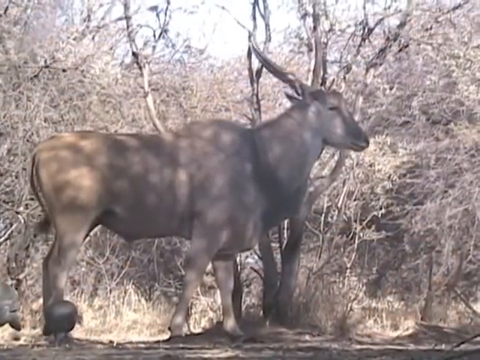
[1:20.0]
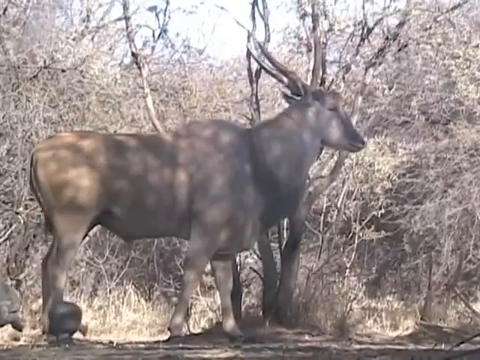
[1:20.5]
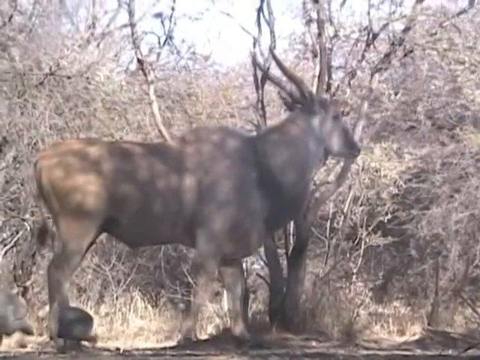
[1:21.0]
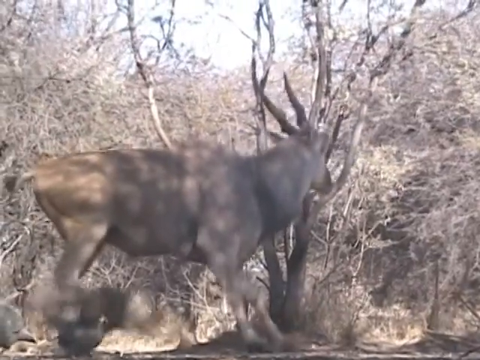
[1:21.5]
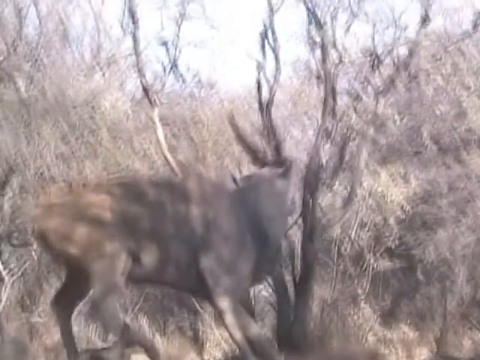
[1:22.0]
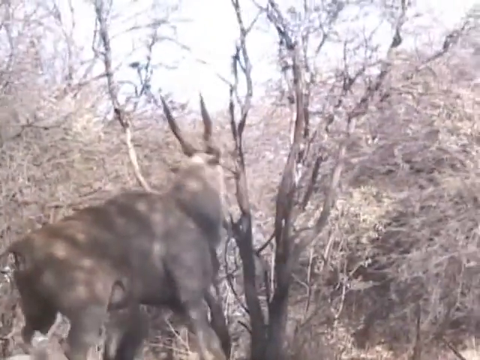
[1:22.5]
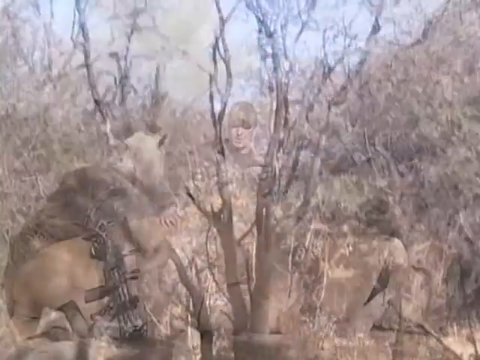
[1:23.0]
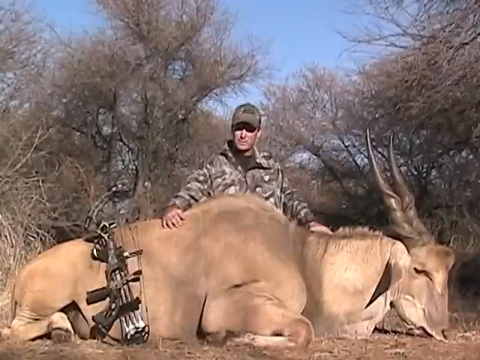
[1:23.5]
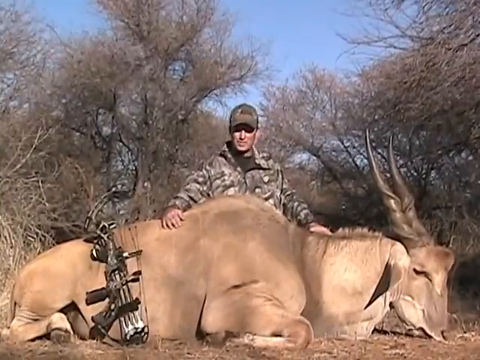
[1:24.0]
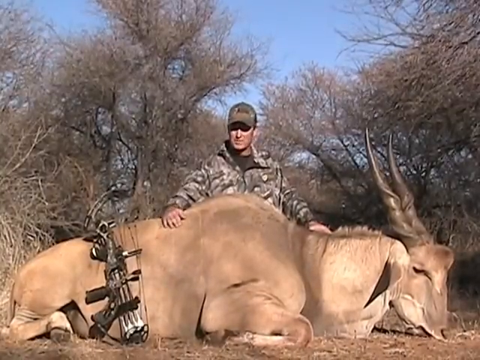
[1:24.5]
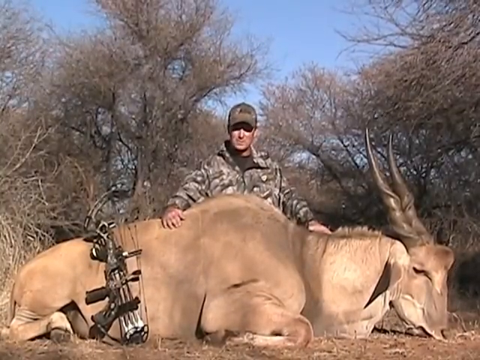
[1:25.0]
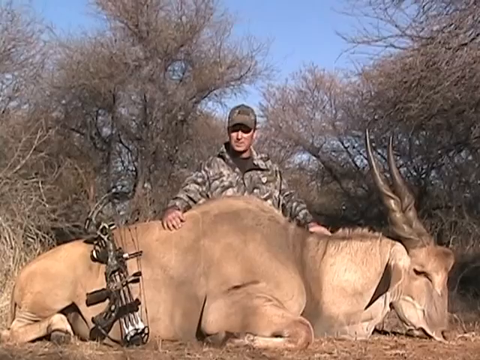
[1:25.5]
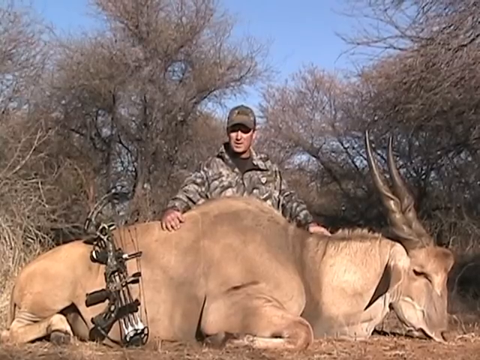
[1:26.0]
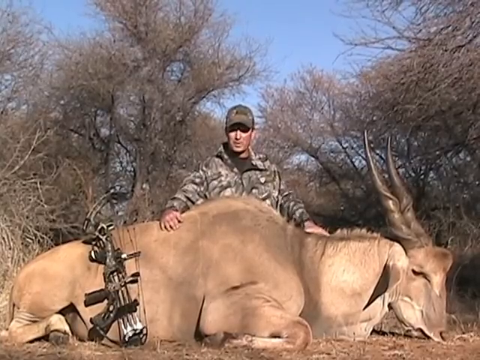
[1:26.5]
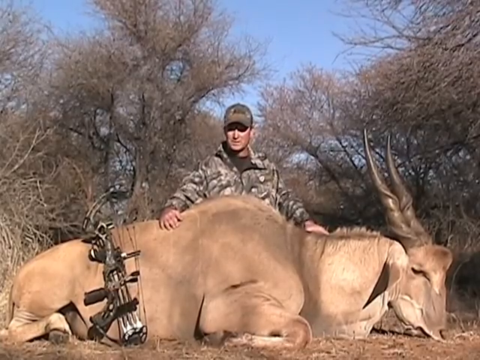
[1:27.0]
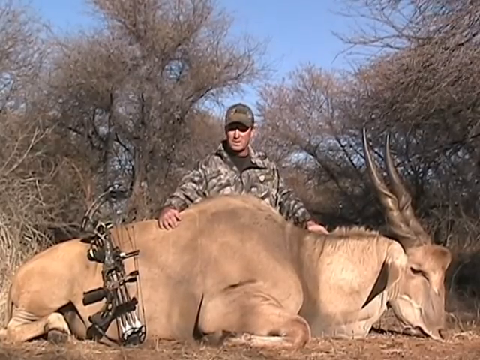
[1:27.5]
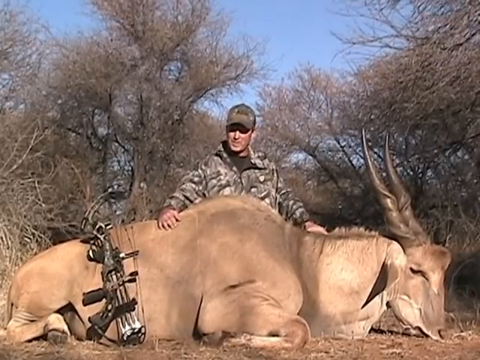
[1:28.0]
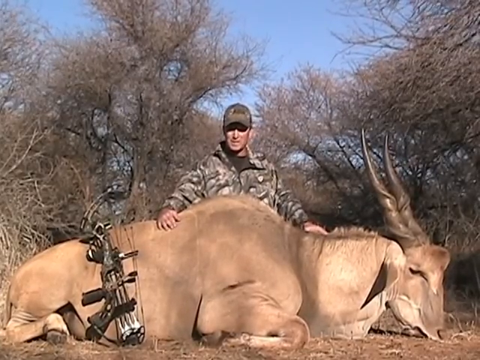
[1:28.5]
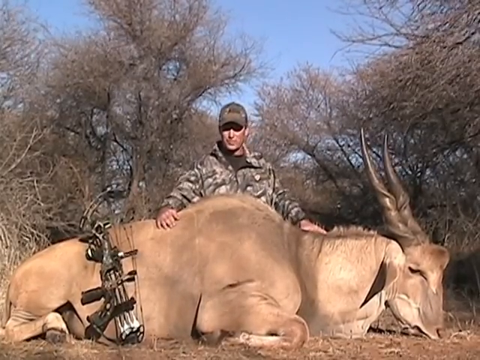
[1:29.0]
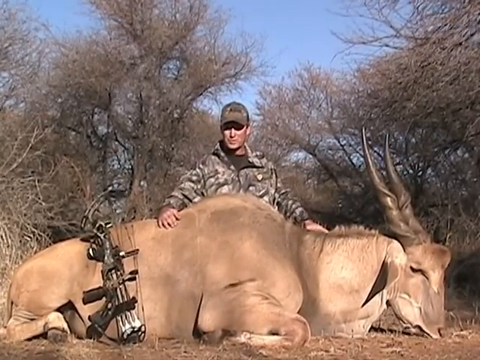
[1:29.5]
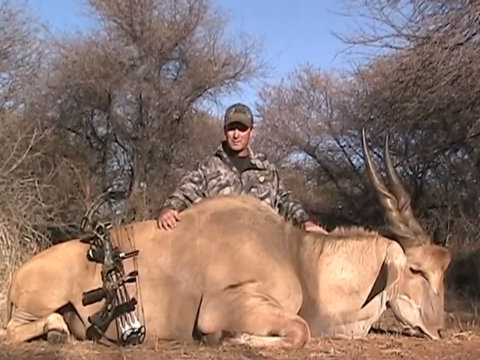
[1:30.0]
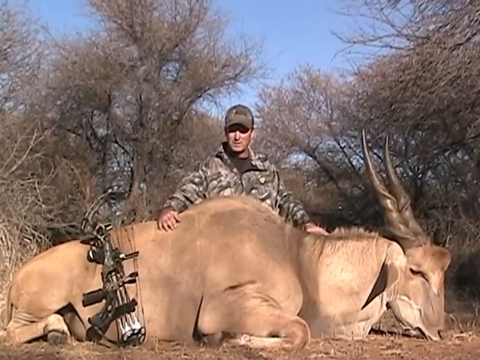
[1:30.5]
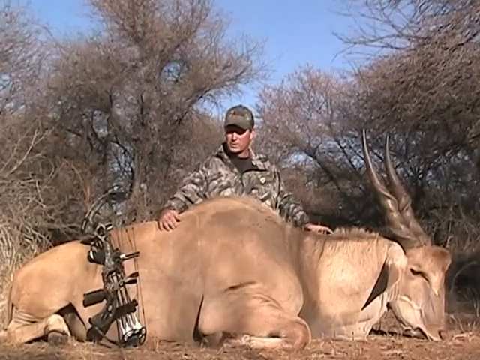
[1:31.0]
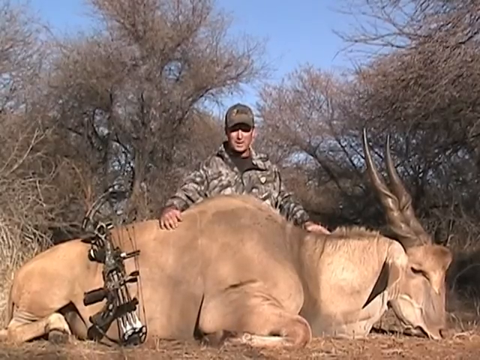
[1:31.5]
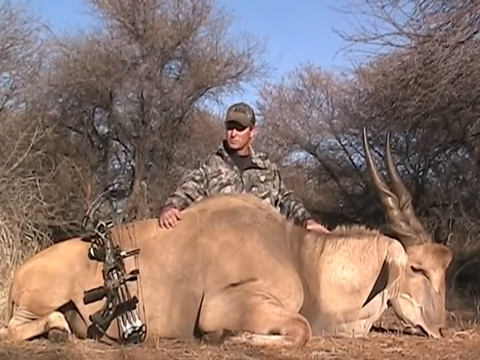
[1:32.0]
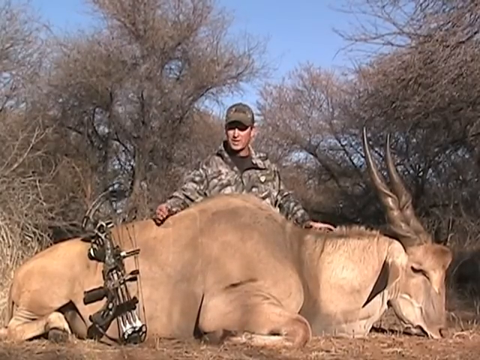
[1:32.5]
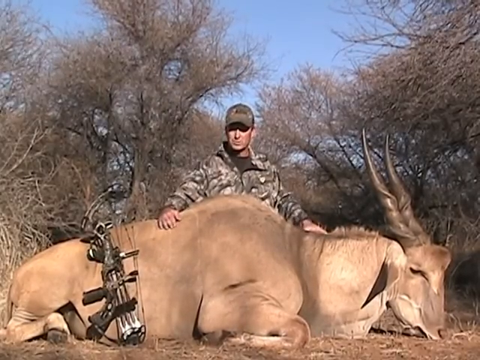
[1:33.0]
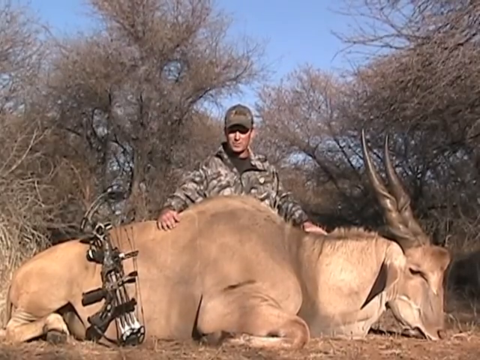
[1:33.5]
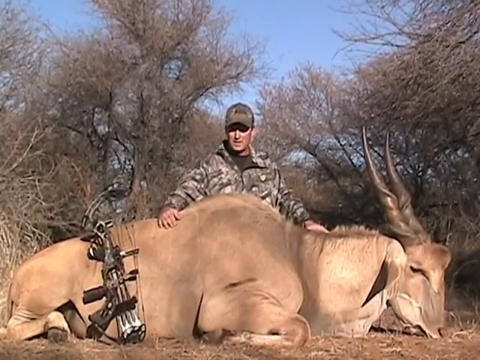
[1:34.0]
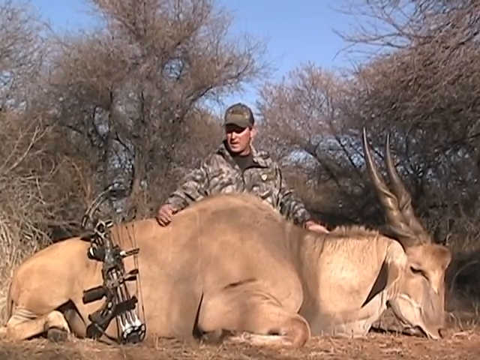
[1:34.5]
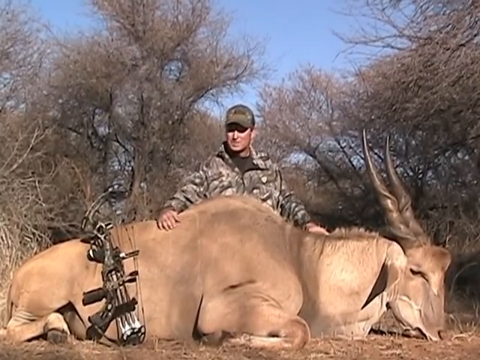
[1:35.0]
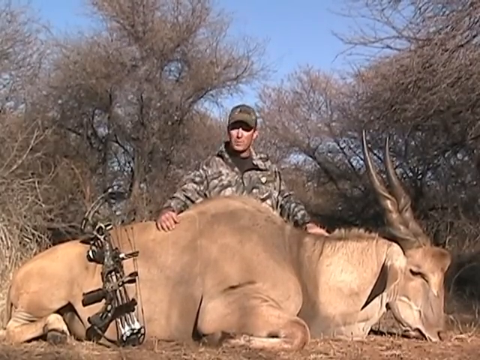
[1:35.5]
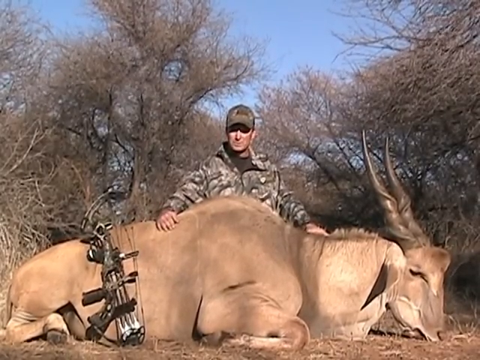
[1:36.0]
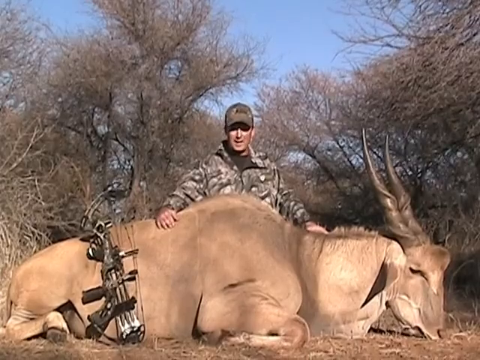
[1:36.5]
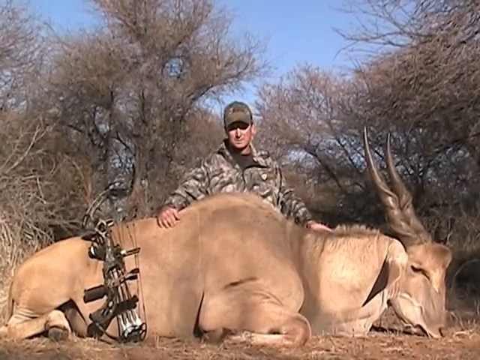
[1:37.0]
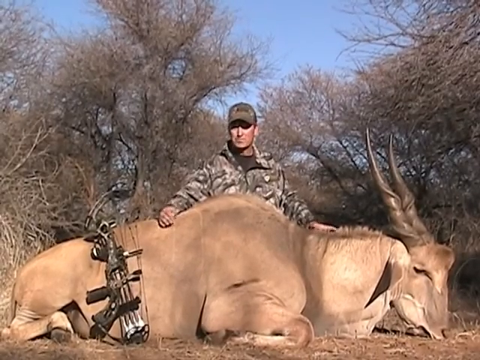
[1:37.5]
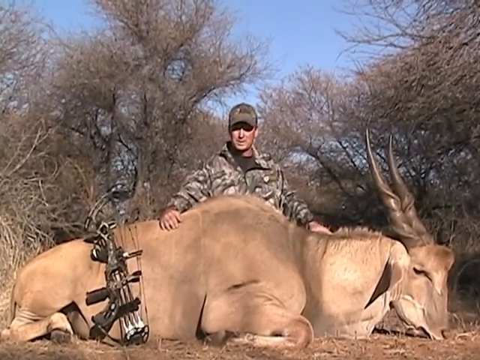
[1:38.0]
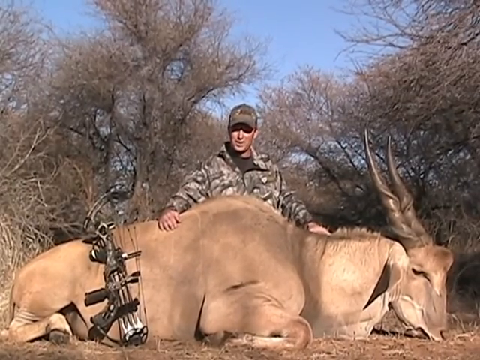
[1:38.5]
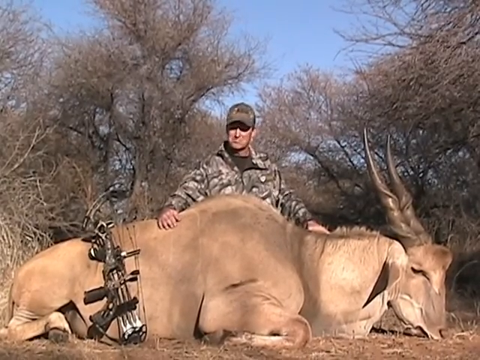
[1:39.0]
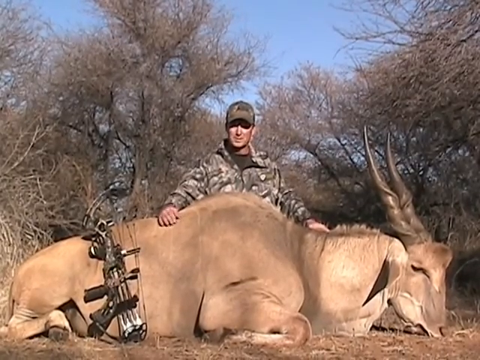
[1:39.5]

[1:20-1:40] The springbok is seen again jumping up and dashing to its left, presumably from an attack by the hunter. The video then cuts to the hunter speaking to the camera once again. As he talks, he shakes his head to the left and right, gestures upward with his left and right hands before bringing them back down, and continues talking with his head down. He then shrugs before placing his hands back down on the springbok's neck. The hunted springbok looks very big, like an older, more mature springbok. Its horns are a lot shorter and pointier than the previous ones, with the twists in the horns less pronounced and only visible towards the bottom. The hunter's cap has something written on it, but it cannot be read because of the video quality. It is a brown hat, and the bright sun casts a shadow over the hunter's eyes.